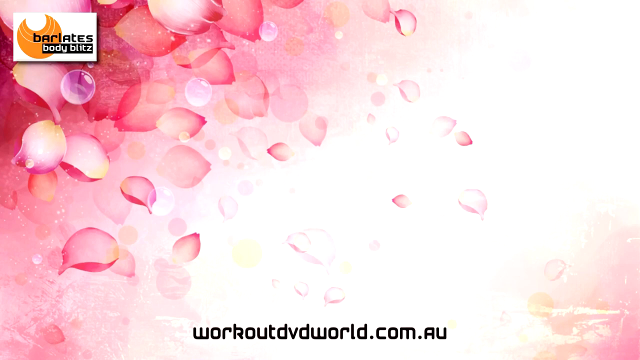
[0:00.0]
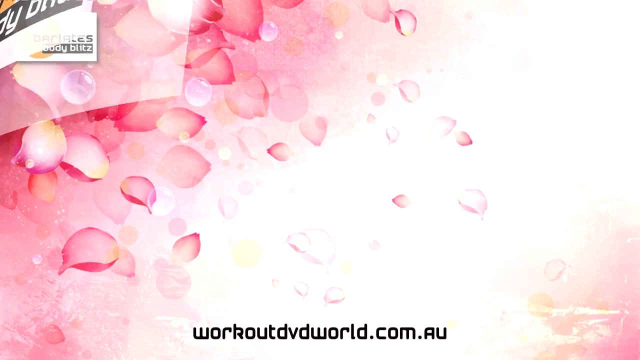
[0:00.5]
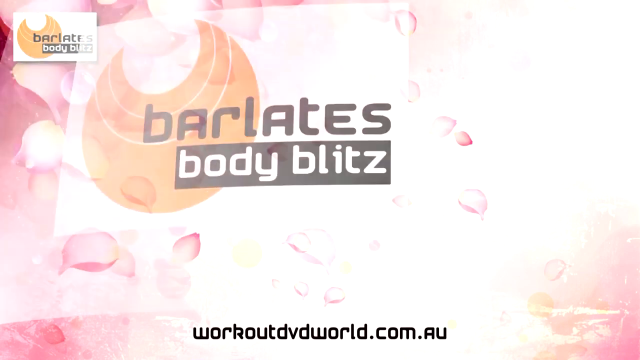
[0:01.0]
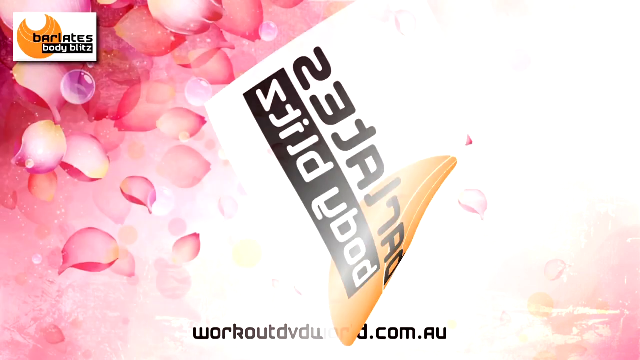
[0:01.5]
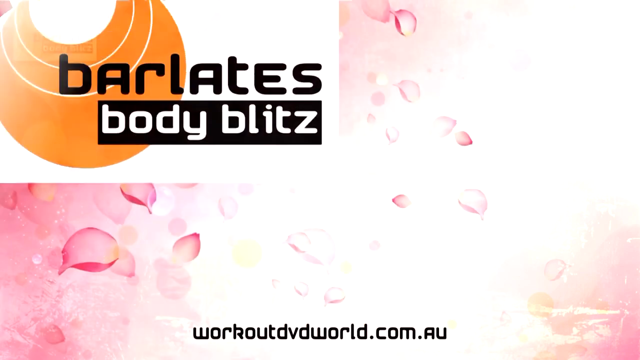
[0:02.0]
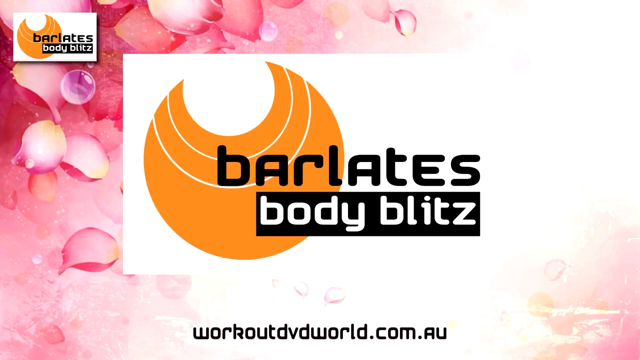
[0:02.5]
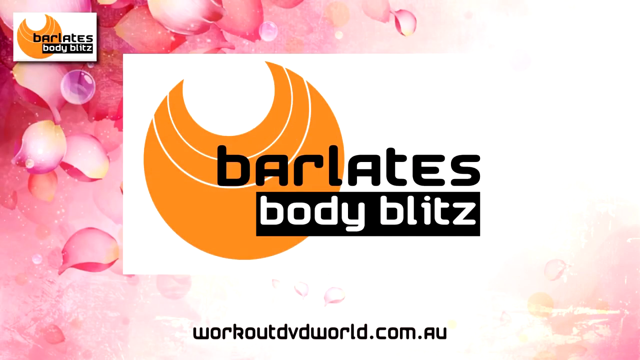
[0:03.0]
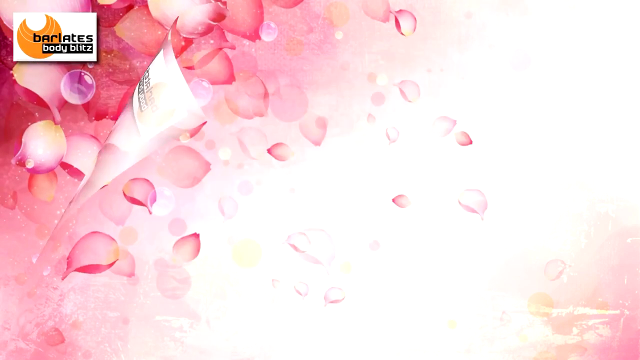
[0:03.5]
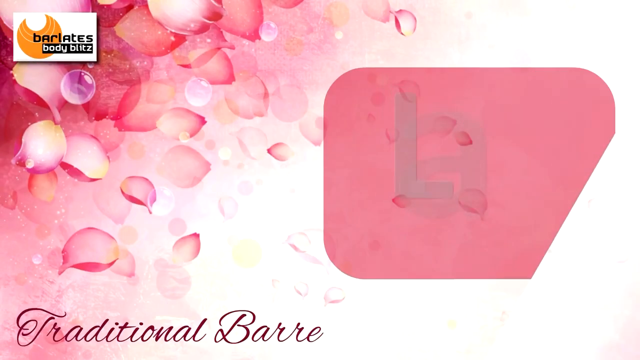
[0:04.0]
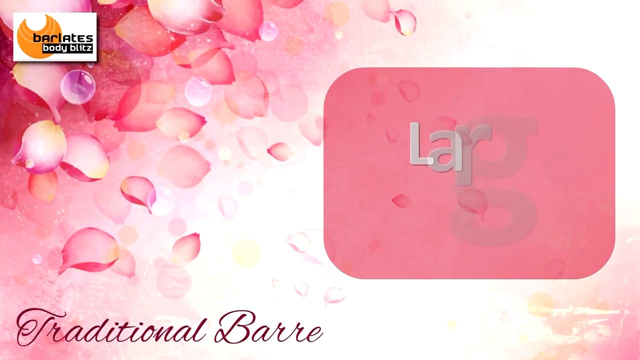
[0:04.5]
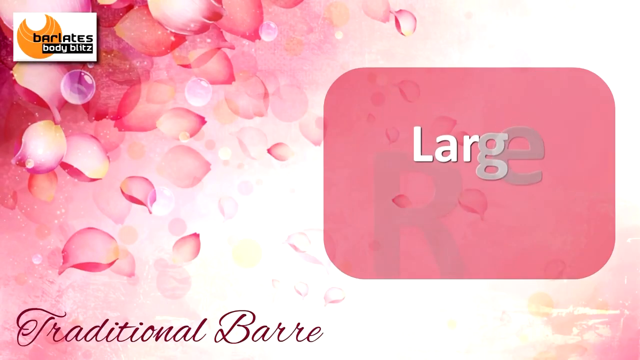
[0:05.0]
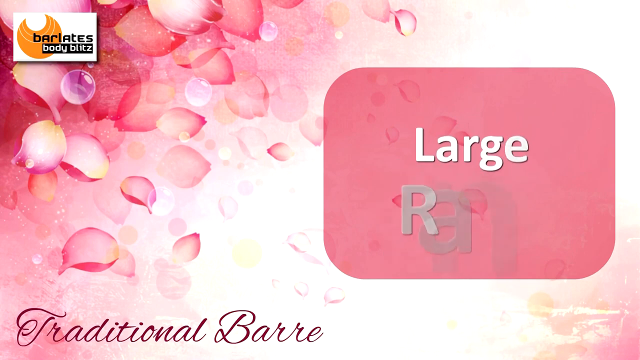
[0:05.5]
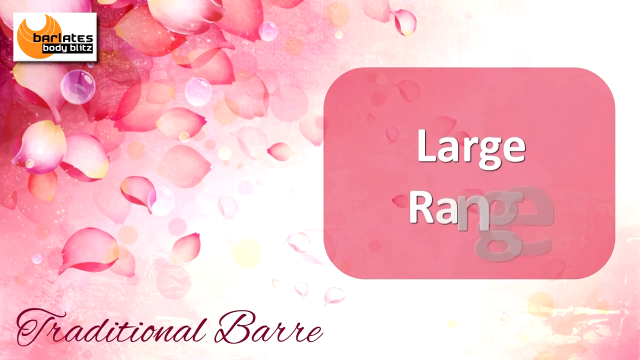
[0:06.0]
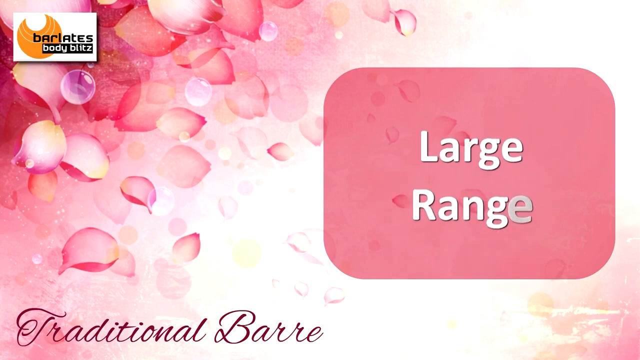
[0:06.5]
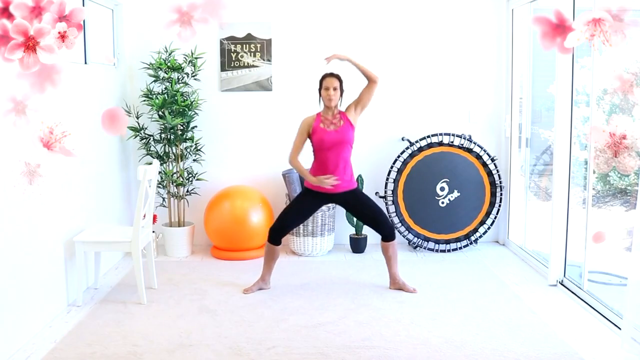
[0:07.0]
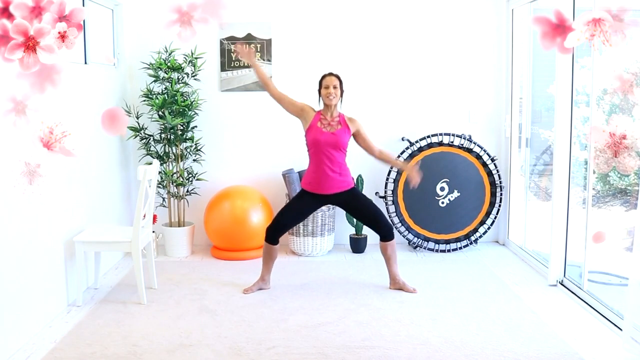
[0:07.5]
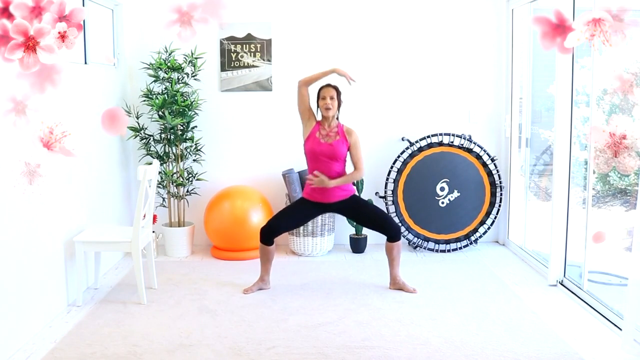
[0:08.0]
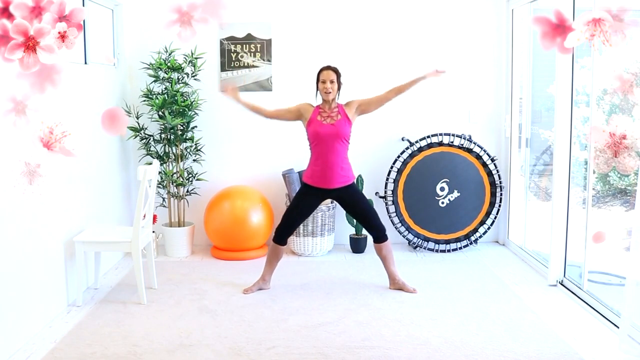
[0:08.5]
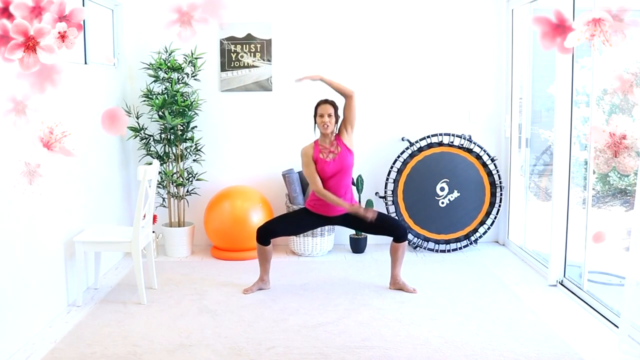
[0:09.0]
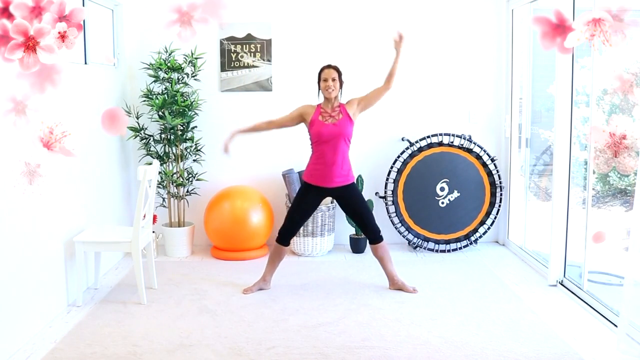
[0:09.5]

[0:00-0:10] An animated introduction in pink and white shows what almost looks like it could be skin cells or balloons. The words "Bartlett's body blitz" appear and then grow larger, followed by "large range" on a pink square background. A woman then does a type of aerobics. She wears a pink top and black sweatpants that reach to her knees. Behind her is a trampoline with some type of lettering and marking: an orange circle with gray in the center. An orange ball is on the woman's right side, the viewer's left, and a plant is on the viewer's left. There is also a white chair and a sign that reads "trust your" followed by something else.